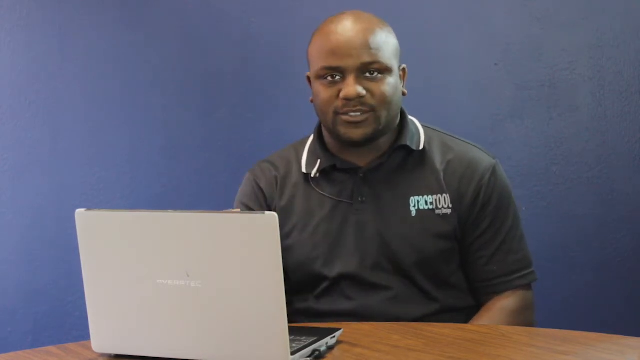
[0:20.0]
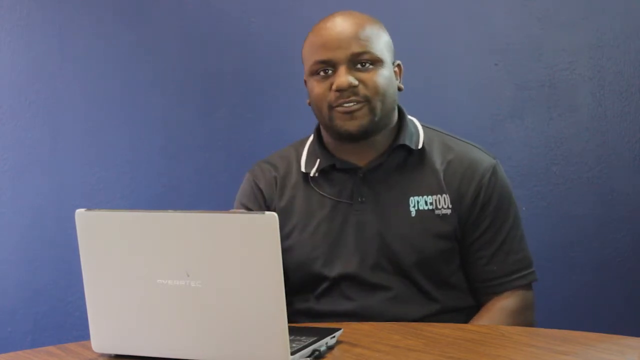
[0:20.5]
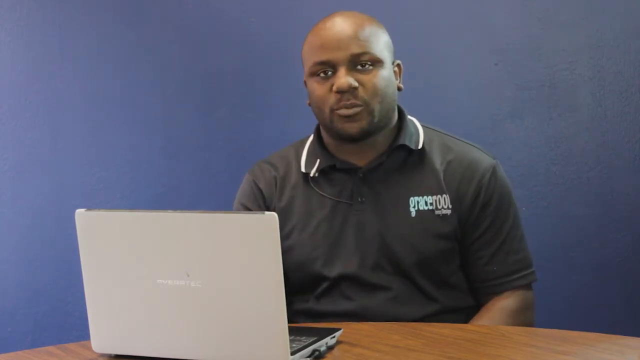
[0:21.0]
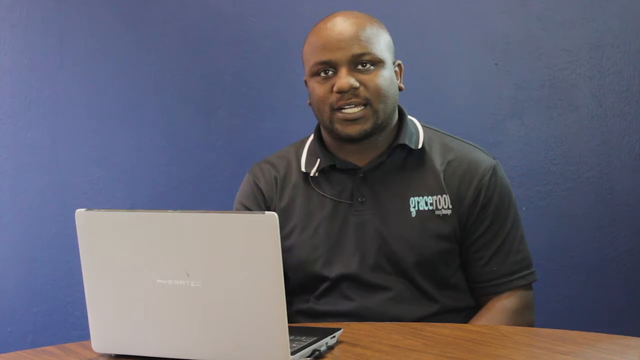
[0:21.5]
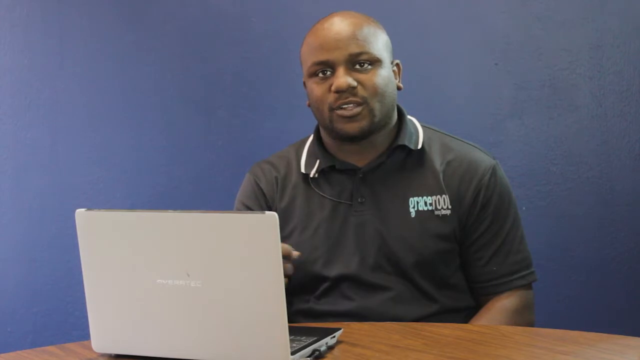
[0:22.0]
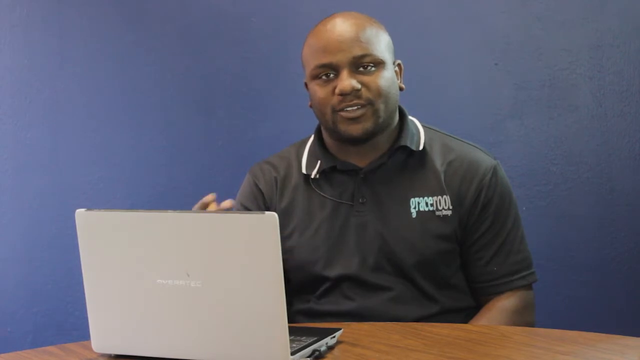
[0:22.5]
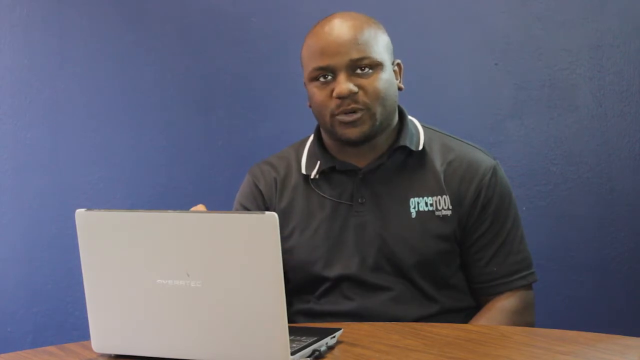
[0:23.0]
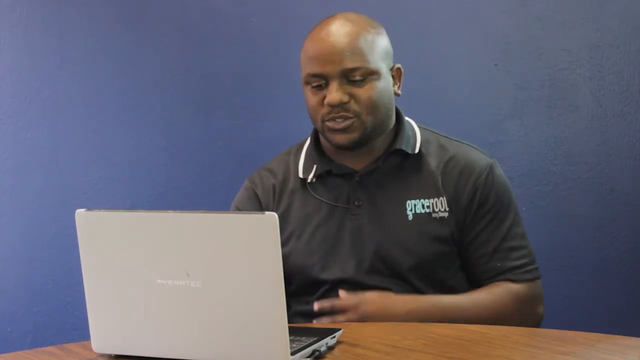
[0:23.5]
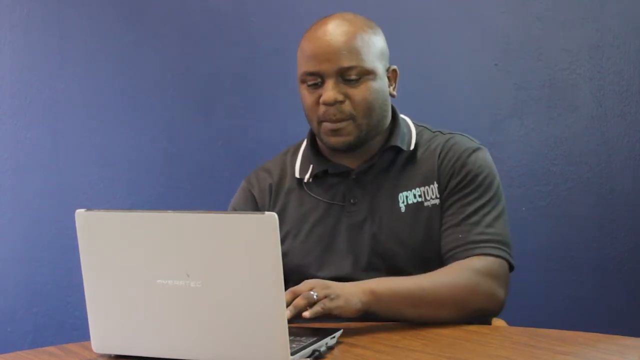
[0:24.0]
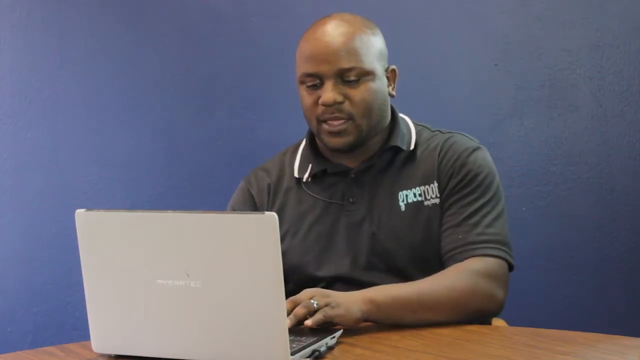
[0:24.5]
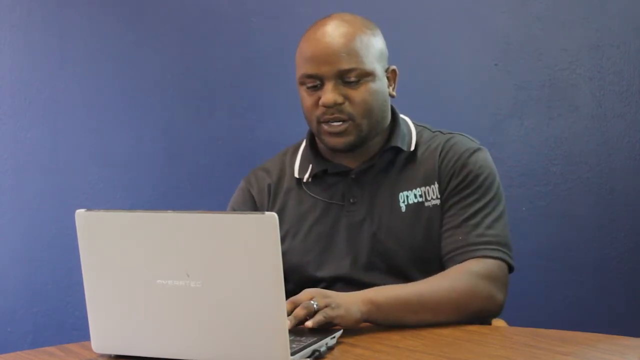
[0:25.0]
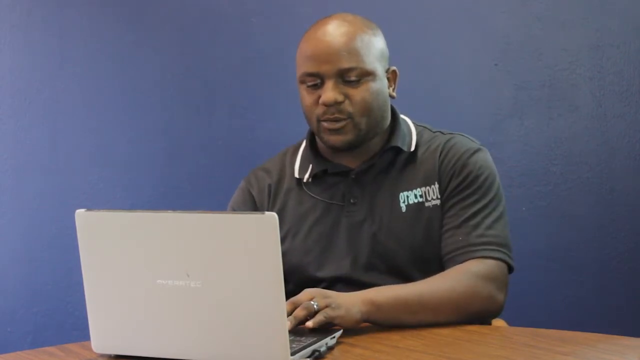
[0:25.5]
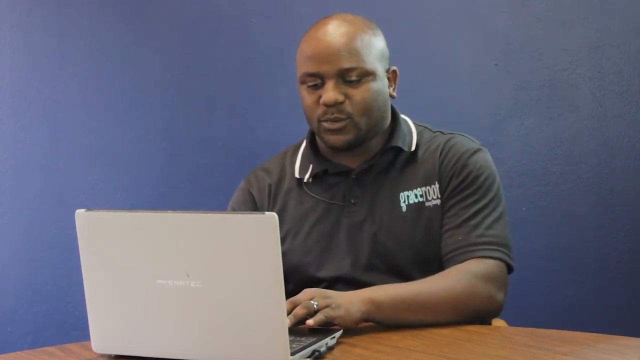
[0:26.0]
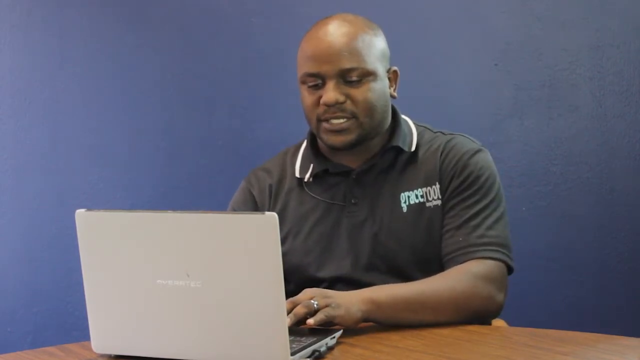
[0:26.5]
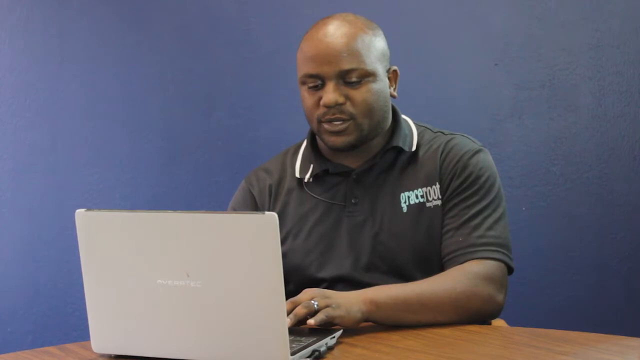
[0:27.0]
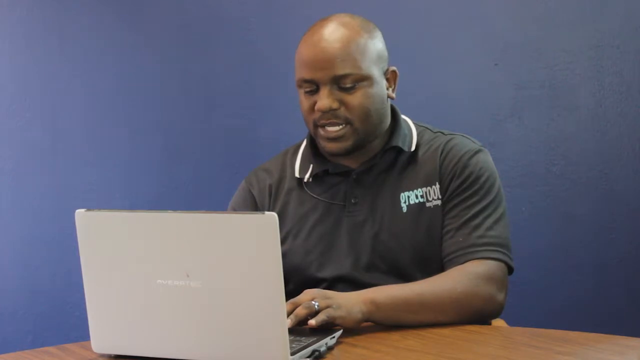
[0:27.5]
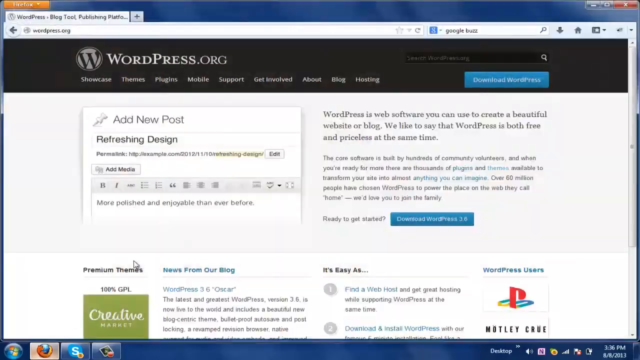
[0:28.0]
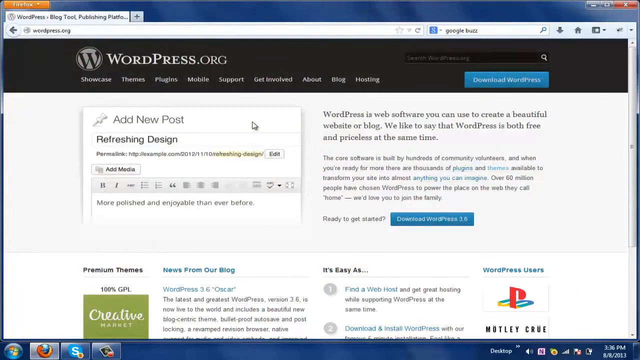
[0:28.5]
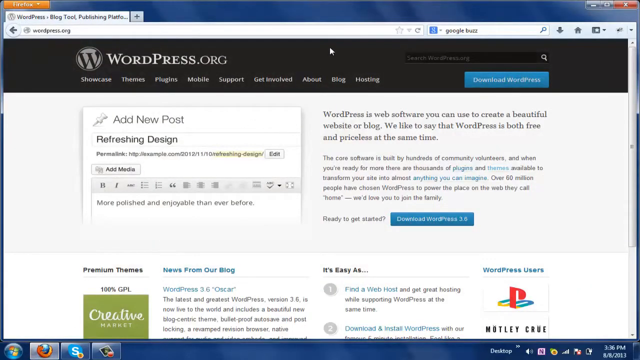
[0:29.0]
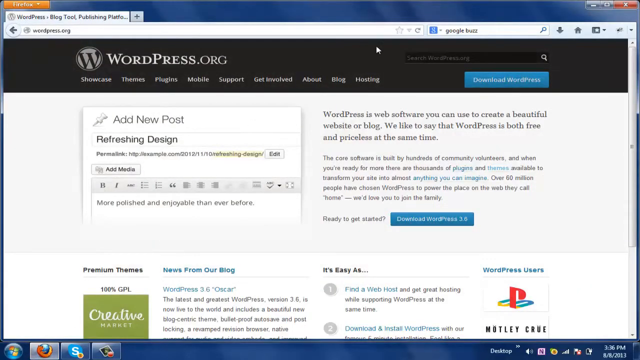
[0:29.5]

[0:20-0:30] A man with a black complexion, a creative director from WordPress.org, is shown explaining something about technology. The footage moves very fast. He appears to be searching for something, though what exactly is unclear.